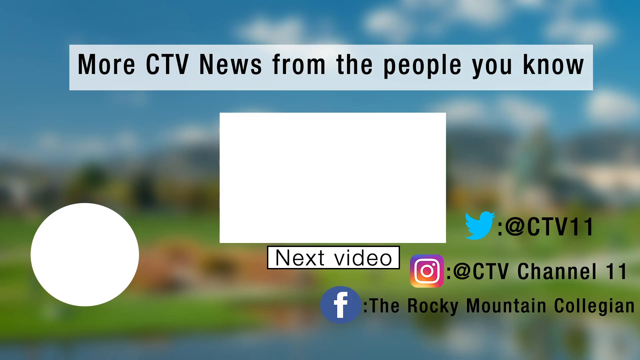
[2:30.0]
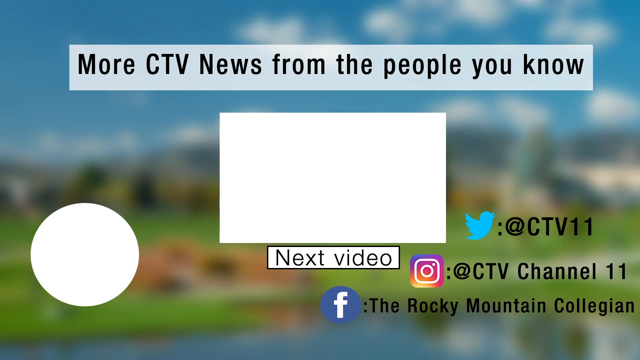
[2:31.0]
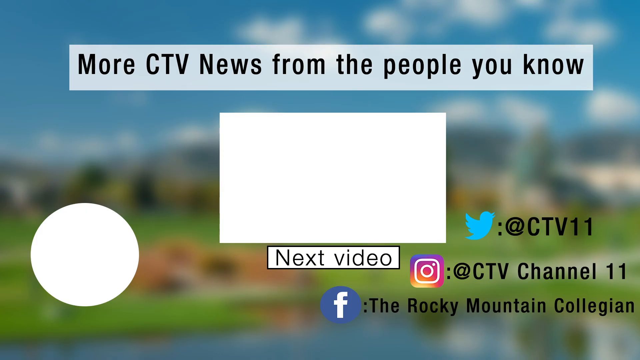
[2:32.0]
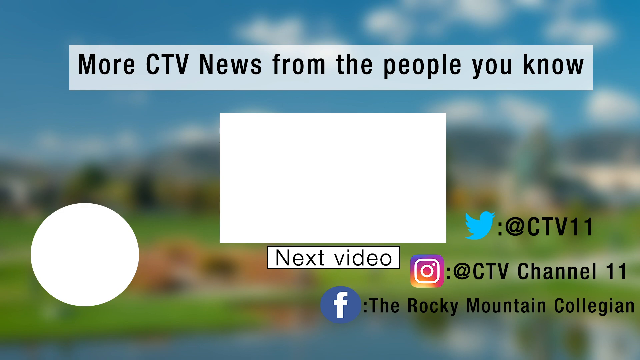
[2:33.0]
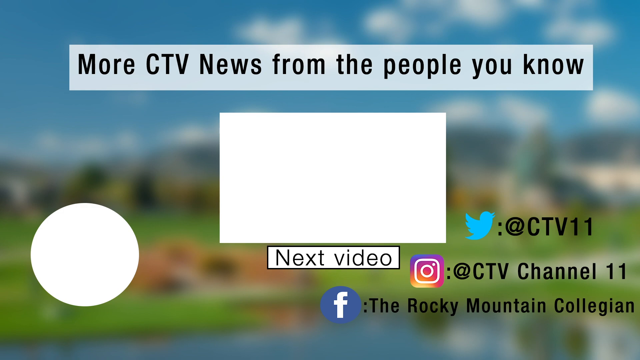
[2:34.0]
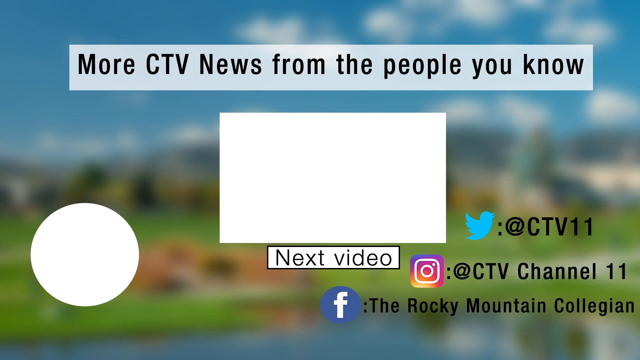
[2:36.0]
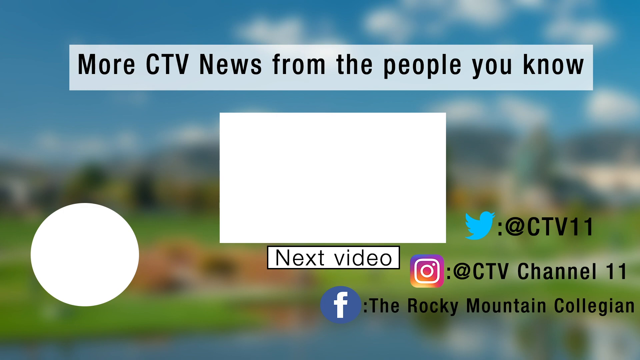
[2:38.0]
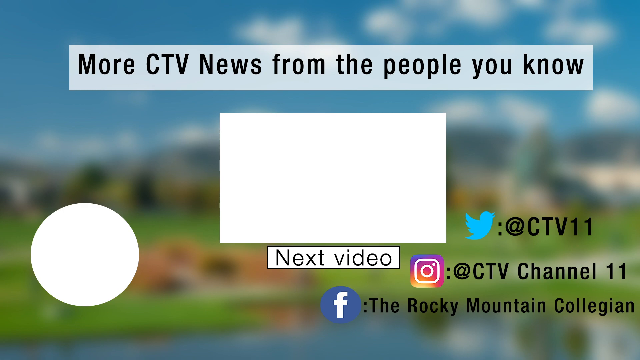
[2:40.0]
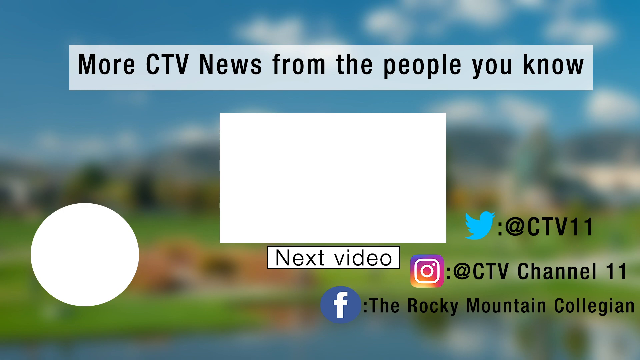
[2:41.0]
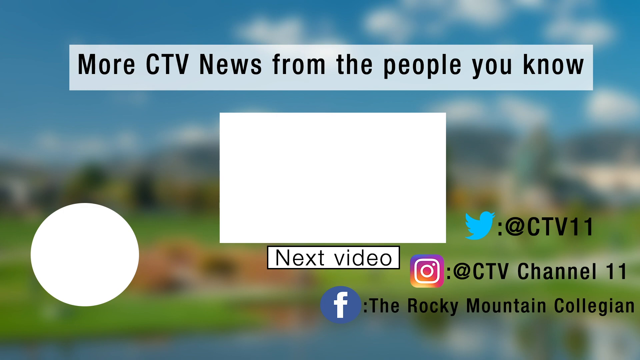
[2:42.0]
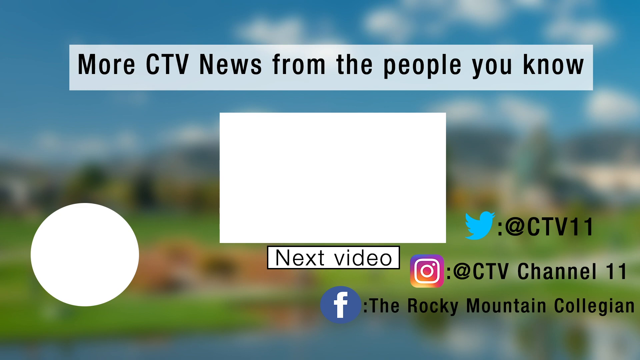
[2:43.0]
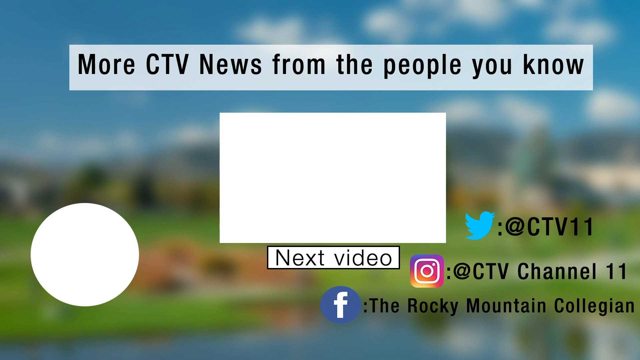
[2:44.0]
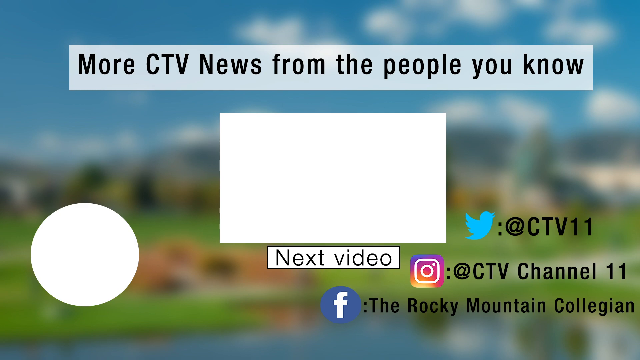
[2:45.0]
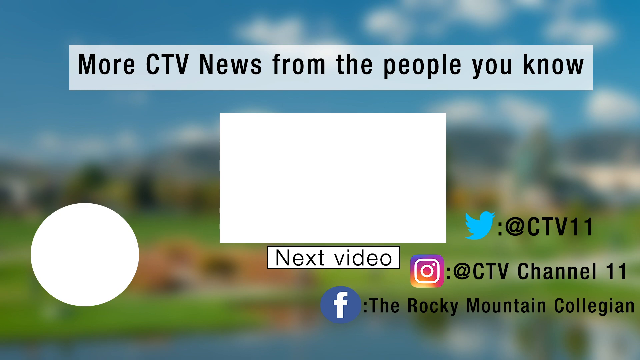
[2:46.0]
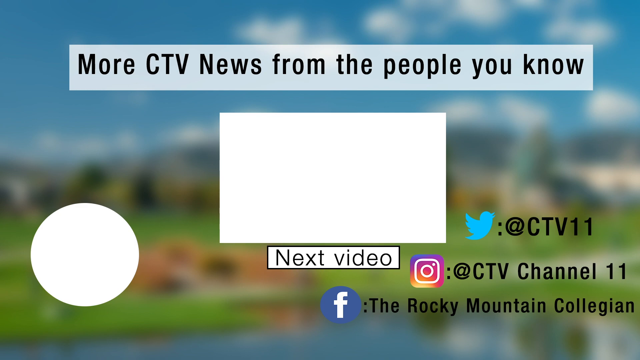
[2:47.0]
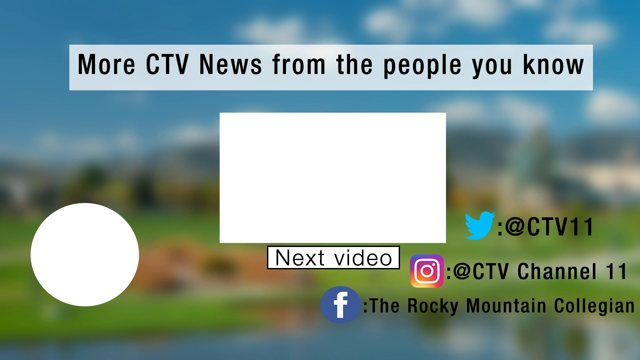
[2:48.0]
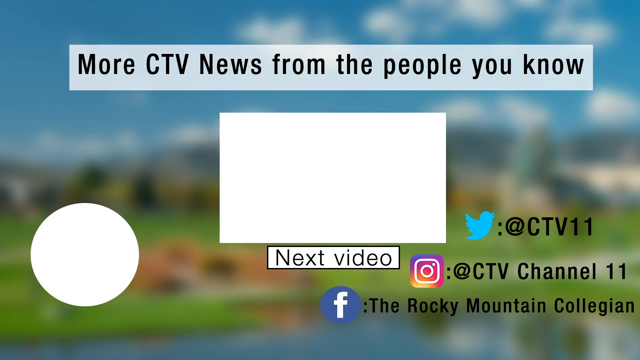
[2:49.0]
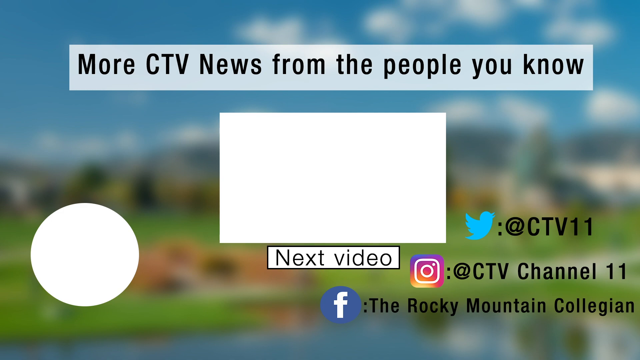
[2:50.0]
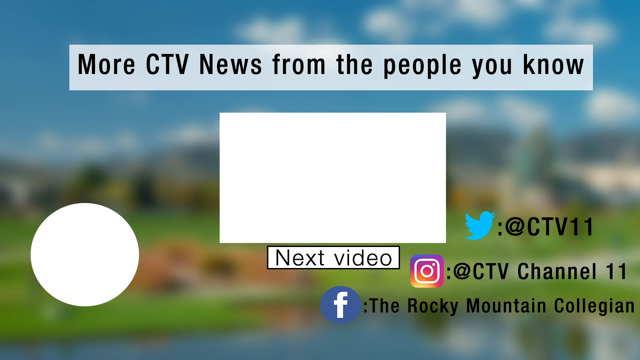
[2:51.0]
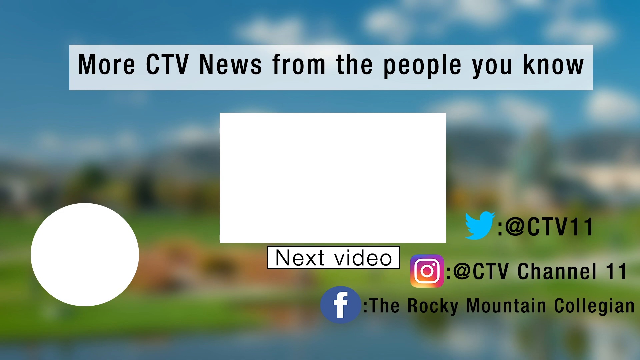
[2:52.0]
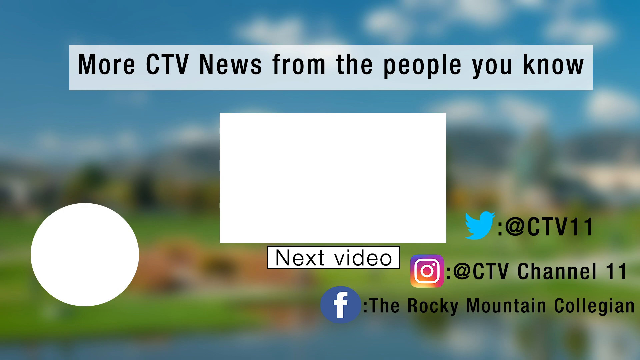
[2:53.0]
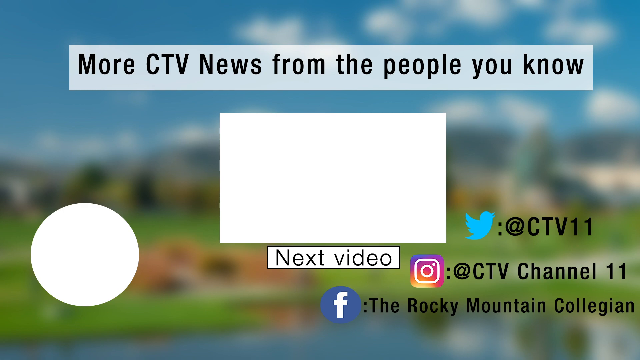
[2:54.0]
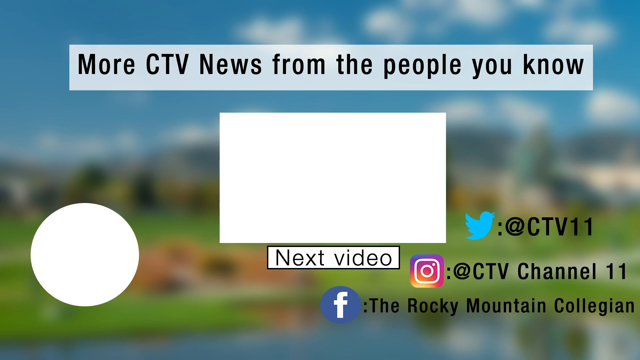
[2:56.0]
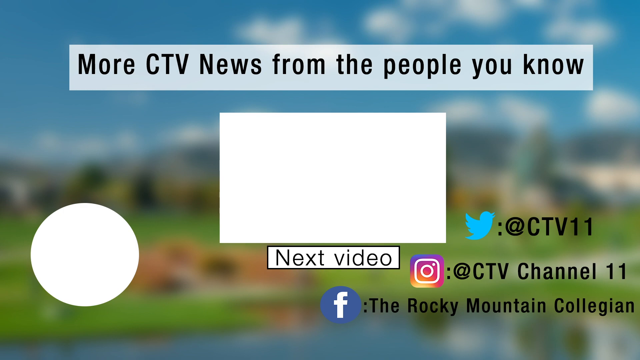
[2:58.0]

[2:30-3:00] An end screen has a background of what looks like sky and possibly kind of green grass, with the text "more CTV news from the people you know". It lists social media handles: the Twitter bird with "at CTV 11", Instagram "at CTV channel 11", and Facebook "the Rocky Mountain Collegian".